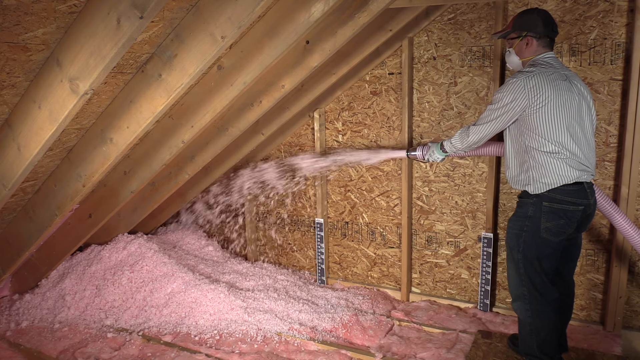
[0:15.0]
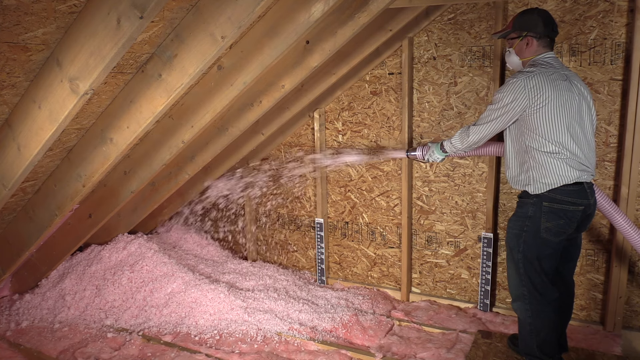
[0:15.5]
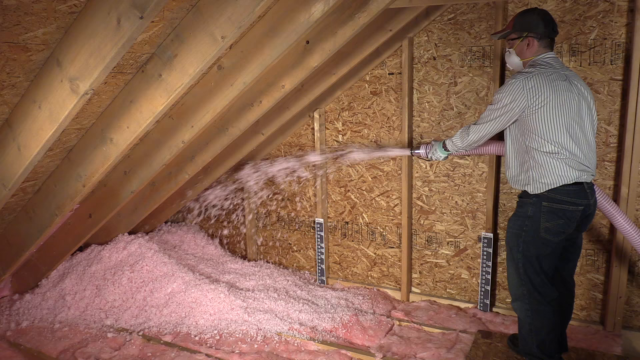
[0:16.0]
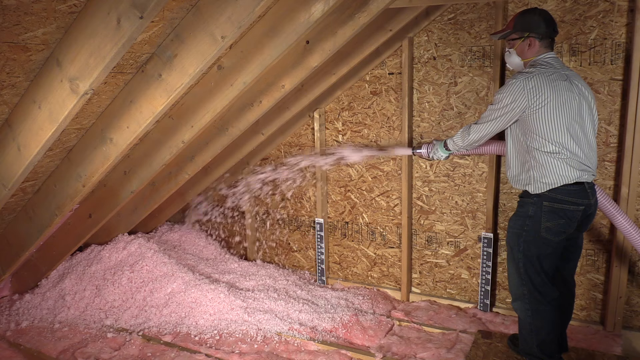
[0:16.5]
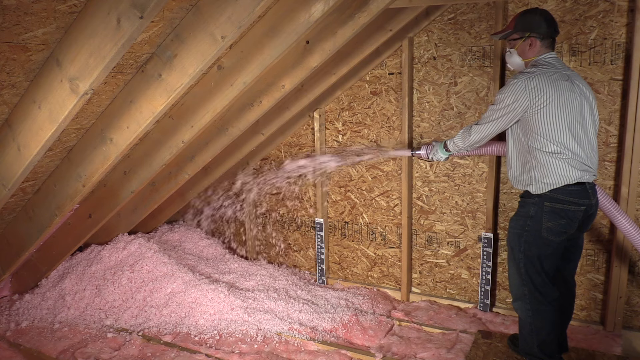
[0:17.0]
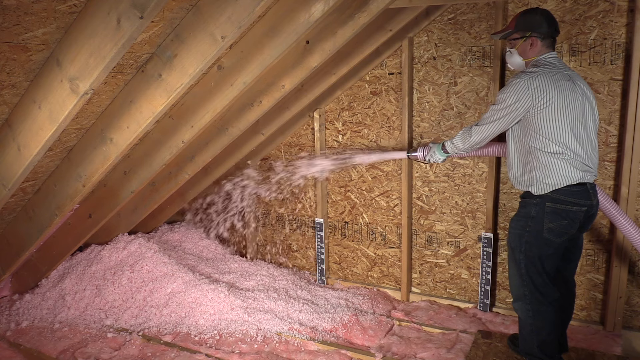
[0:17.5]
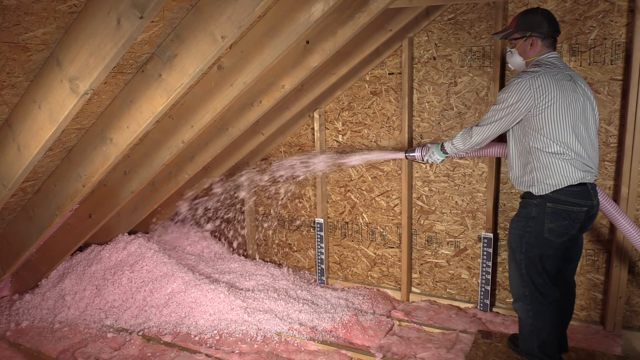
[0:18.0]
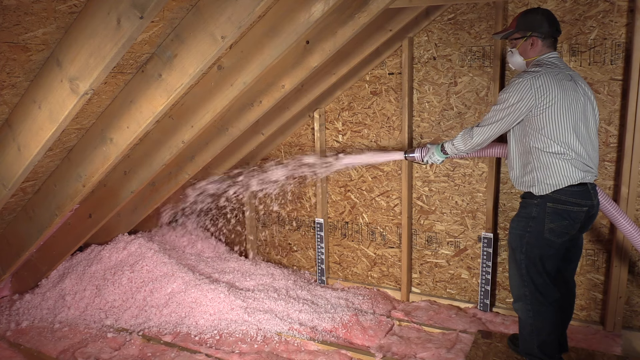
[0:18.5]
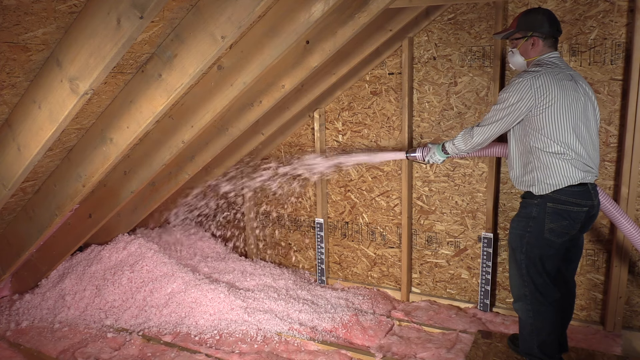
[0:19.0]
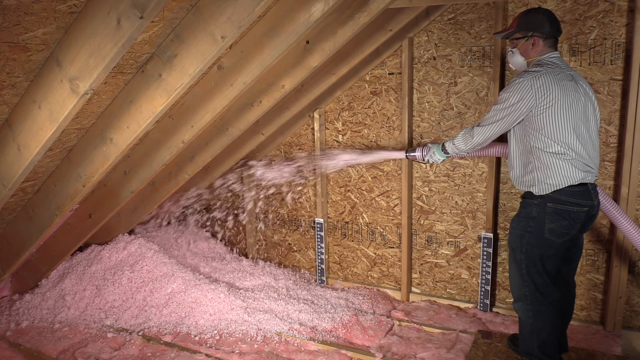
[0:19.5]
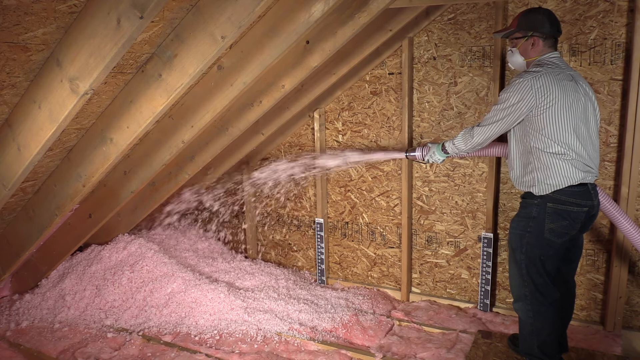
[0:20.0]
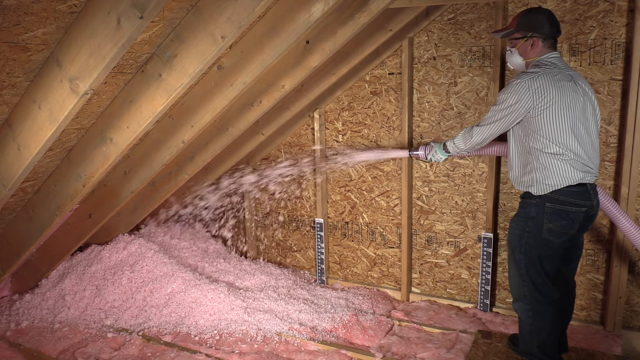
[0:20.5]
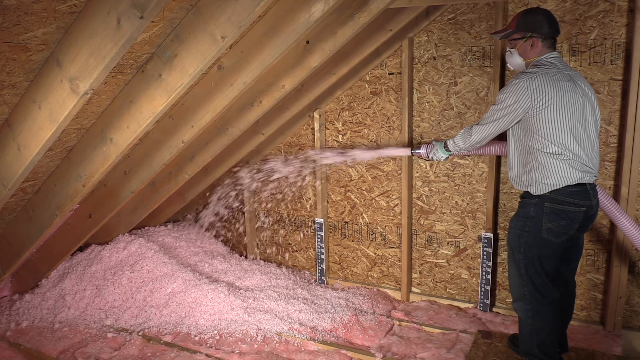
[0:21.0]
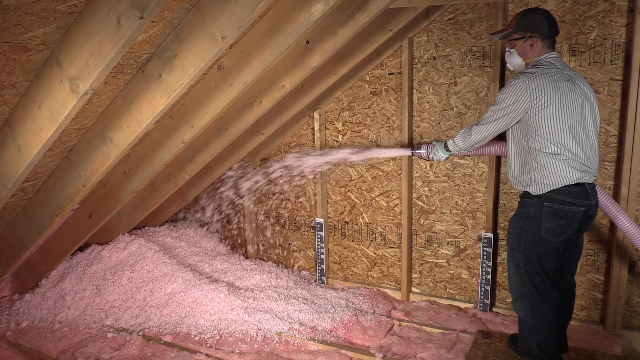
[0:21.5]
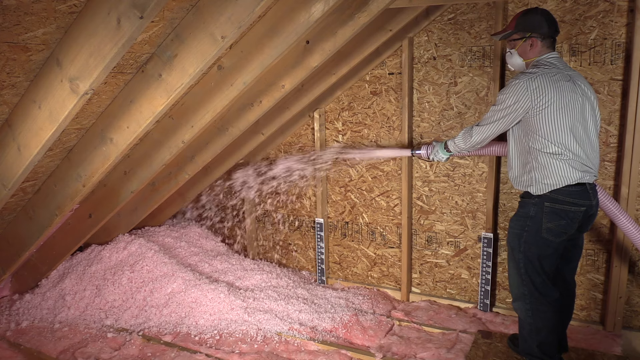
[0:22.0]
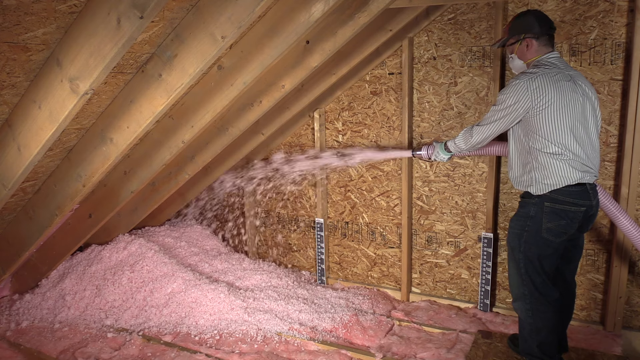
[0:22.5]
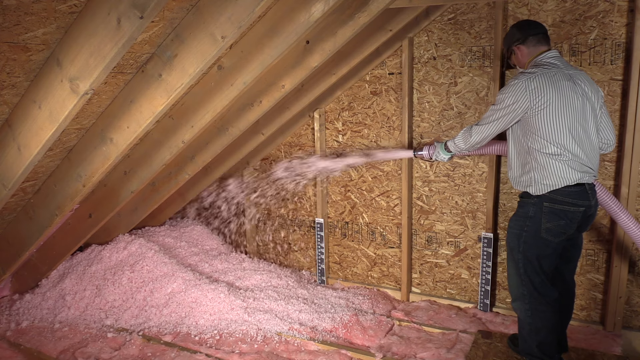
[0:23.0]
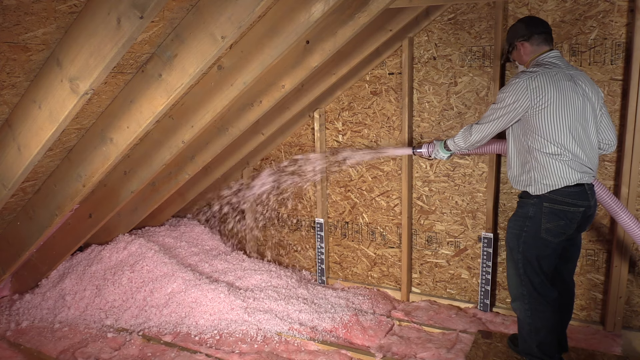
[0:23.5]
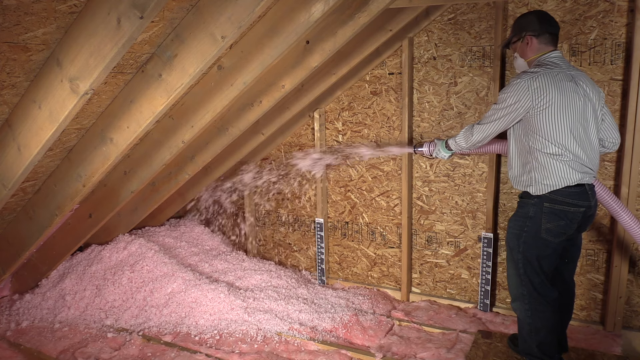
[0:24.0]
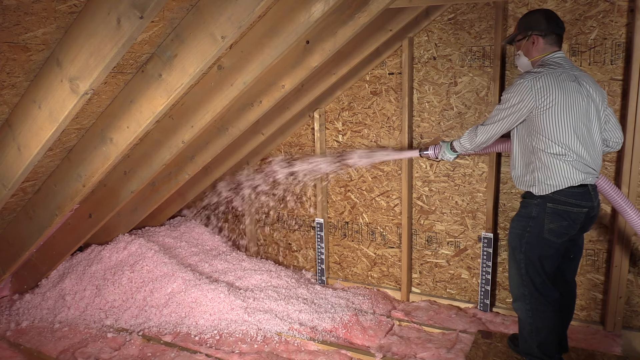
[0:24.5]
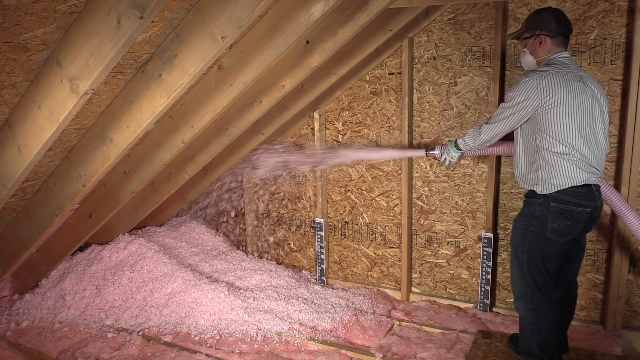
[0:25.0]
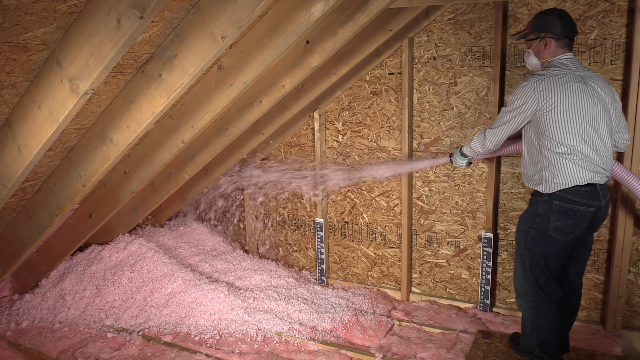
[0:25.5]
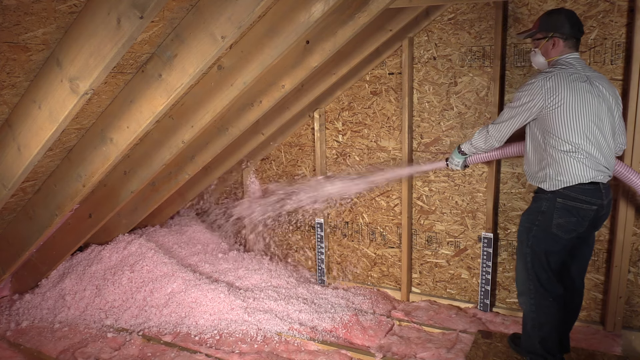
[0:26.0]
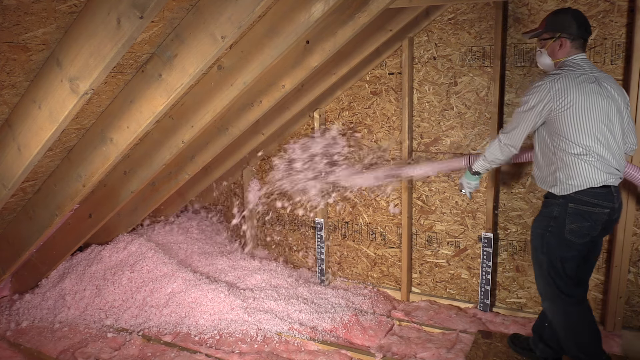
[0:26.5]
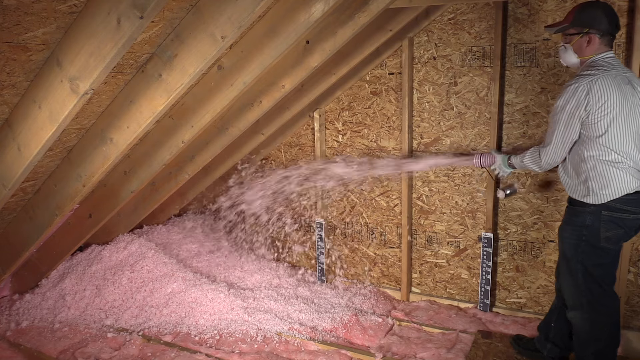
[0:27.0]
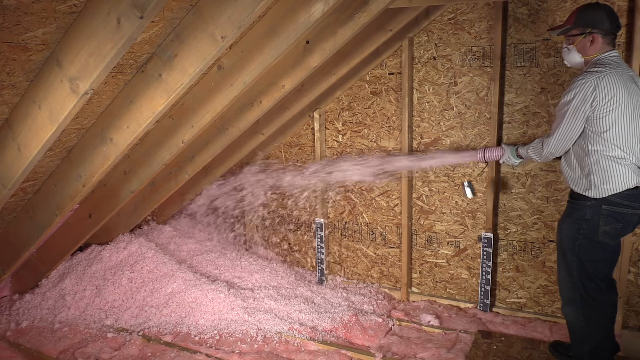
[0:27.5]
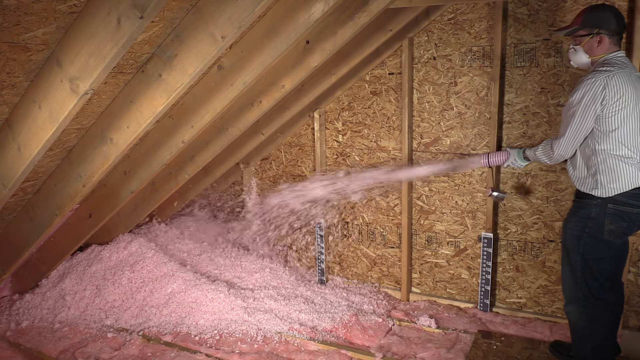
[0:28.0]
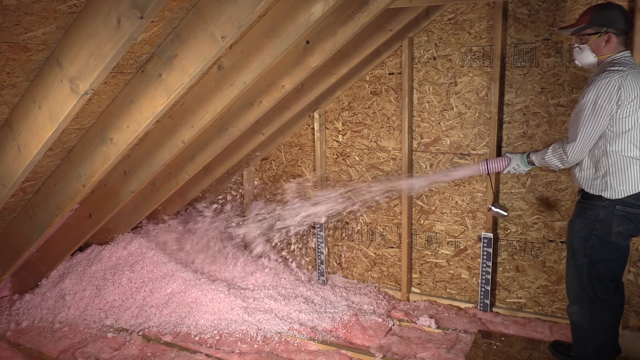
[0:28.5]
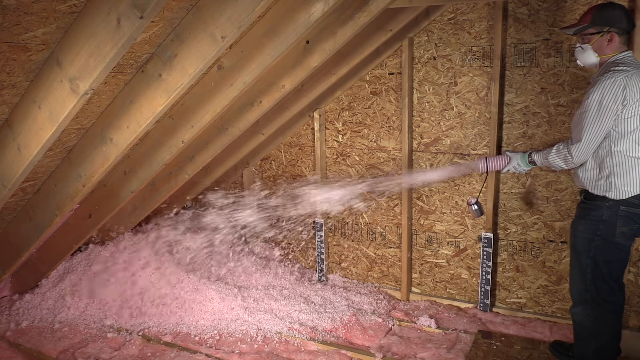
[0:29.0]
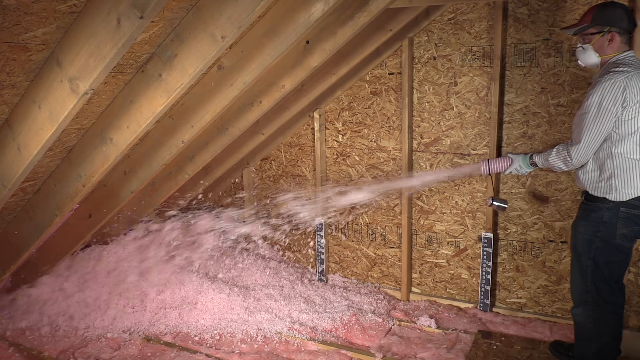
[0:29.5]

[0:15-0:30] In an attic, a man on the right side of the screen wears black jeans, a long-sleeve light gray and white vertically striped shirt, a black baseball cap, glasses, a safety mask over his nose and mouth, and gloves. A particle board wall is in the background, and the slanted interior of the roof is on the left. He holds a hose squirting out pink particulate matter that looks like liquid but is not; a pile of dry matter forms where he aims, on the left at the edge where the roof meets the attic floor. At one point he does something to the hose: he takes a cap off the front of it and backs up a little. The silver cap or something similar still hangs attached from the end, and the material seems to come out a little faster afterward.